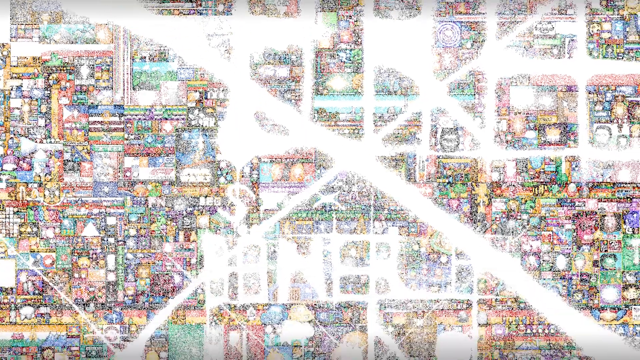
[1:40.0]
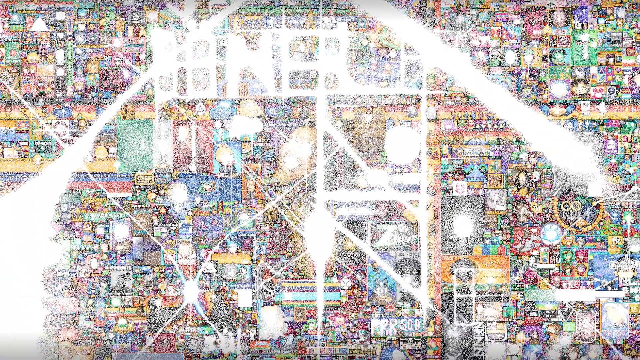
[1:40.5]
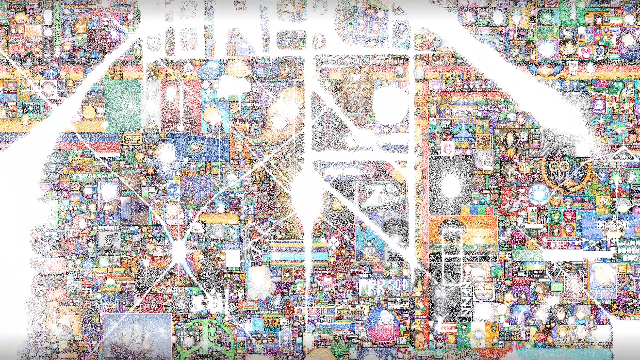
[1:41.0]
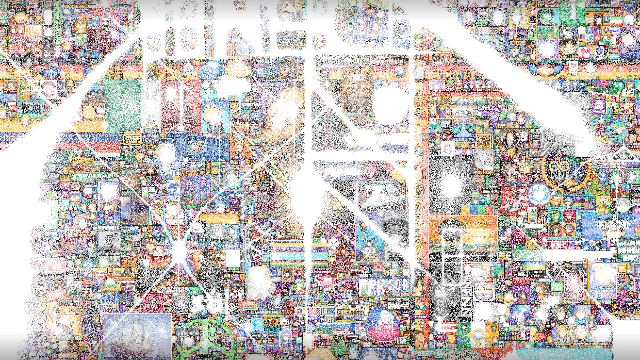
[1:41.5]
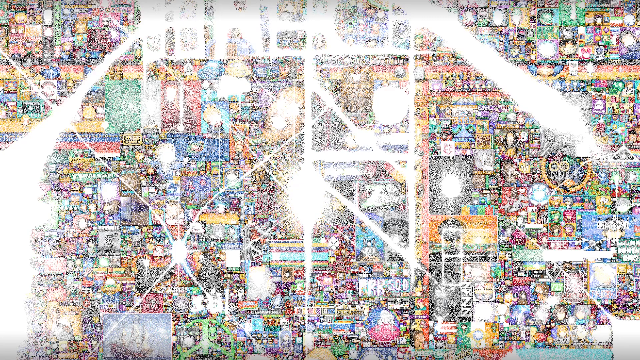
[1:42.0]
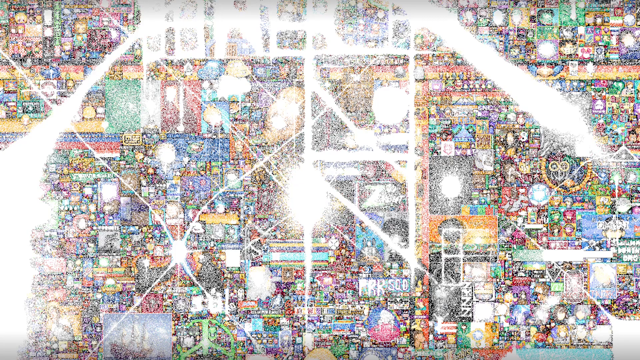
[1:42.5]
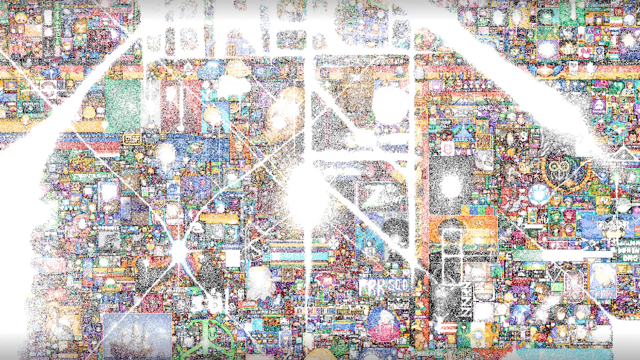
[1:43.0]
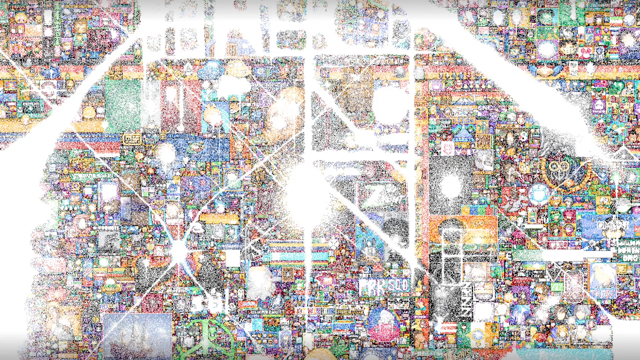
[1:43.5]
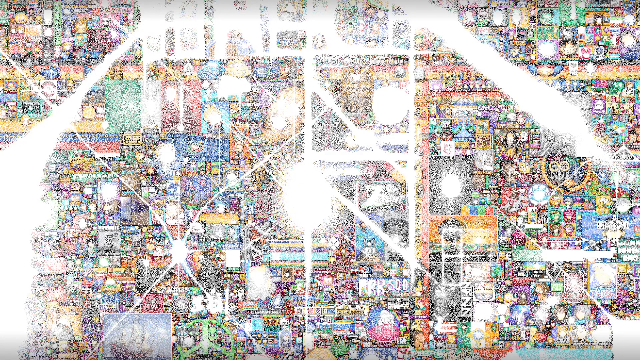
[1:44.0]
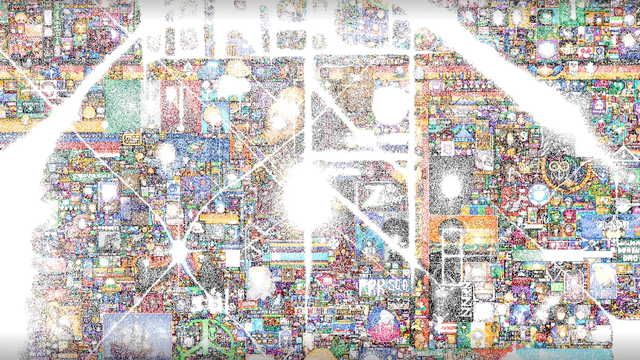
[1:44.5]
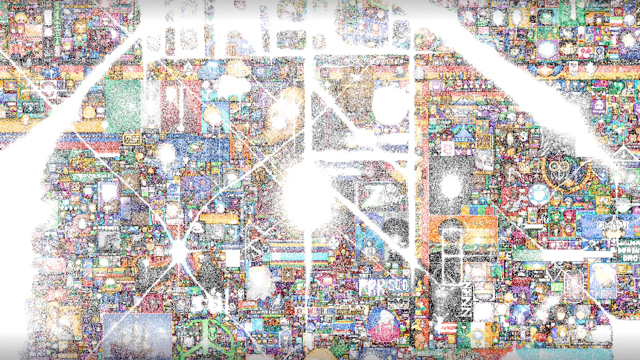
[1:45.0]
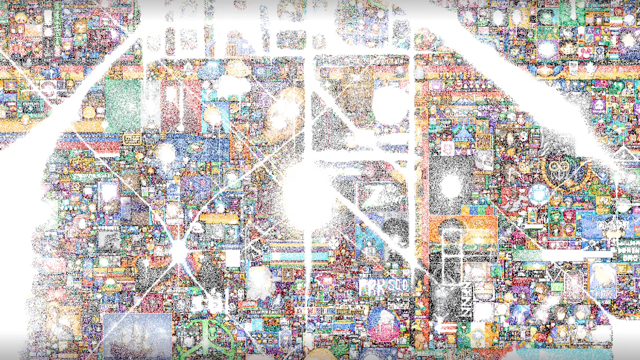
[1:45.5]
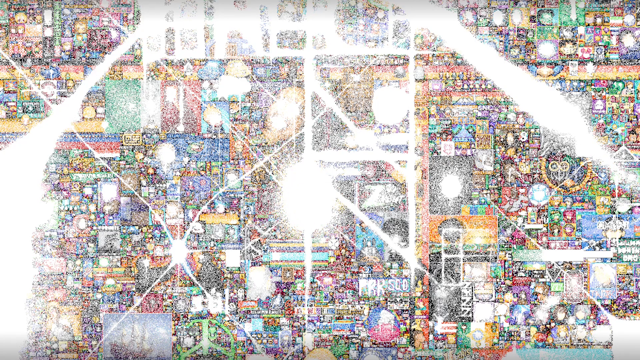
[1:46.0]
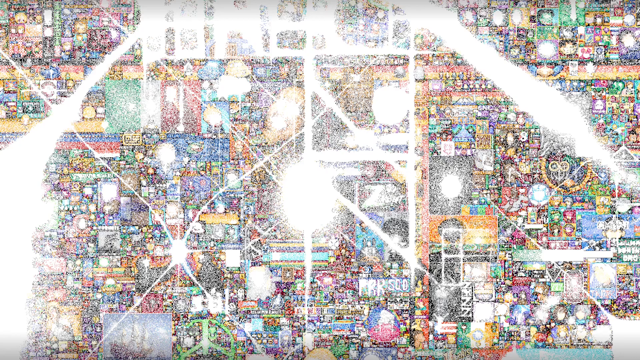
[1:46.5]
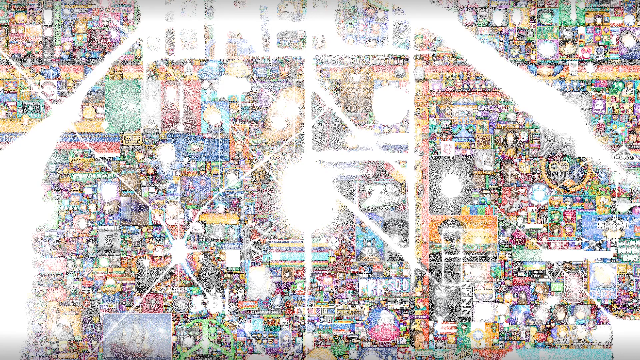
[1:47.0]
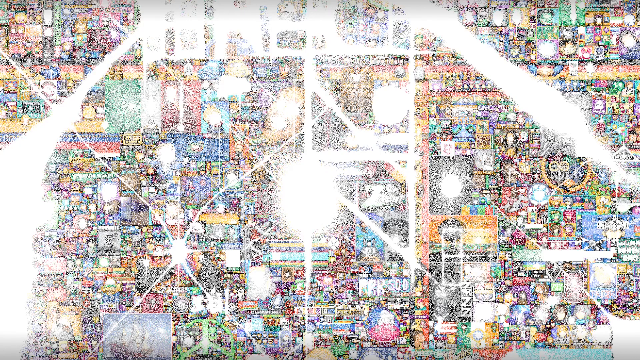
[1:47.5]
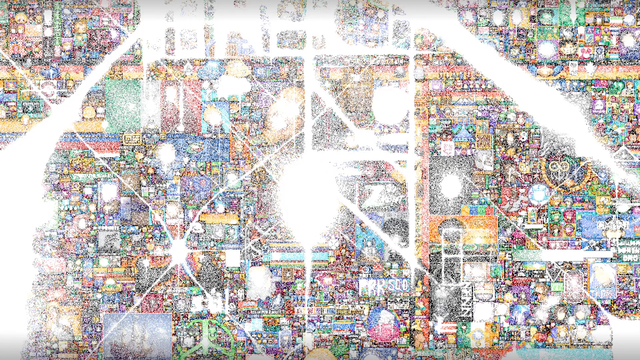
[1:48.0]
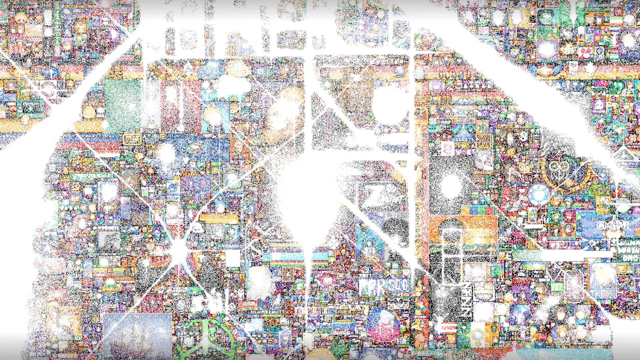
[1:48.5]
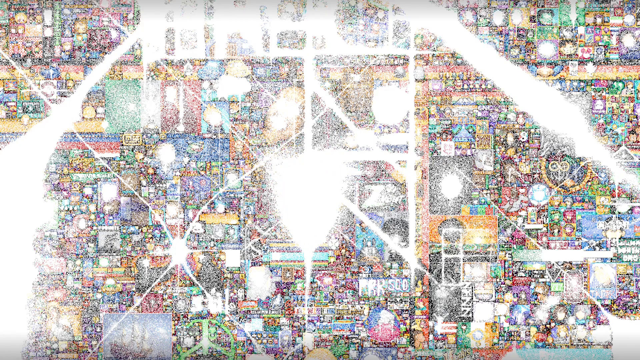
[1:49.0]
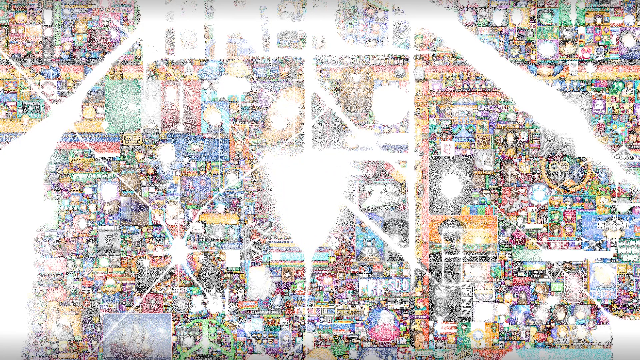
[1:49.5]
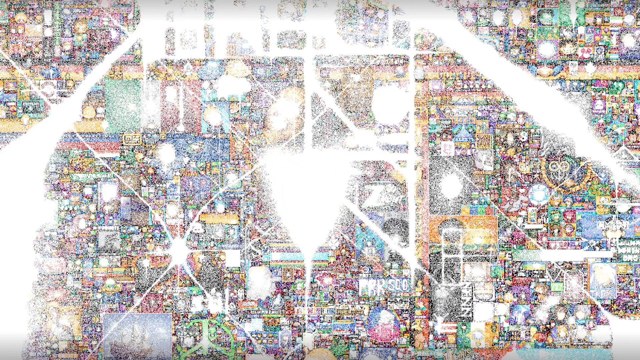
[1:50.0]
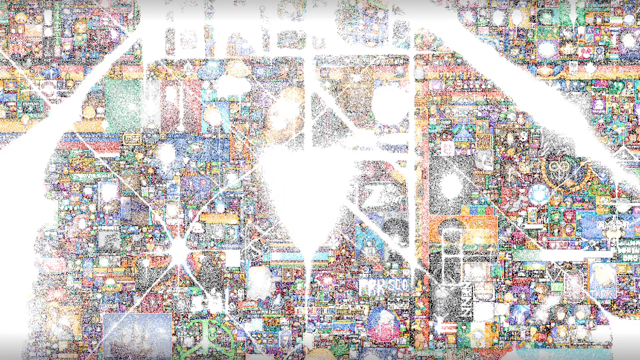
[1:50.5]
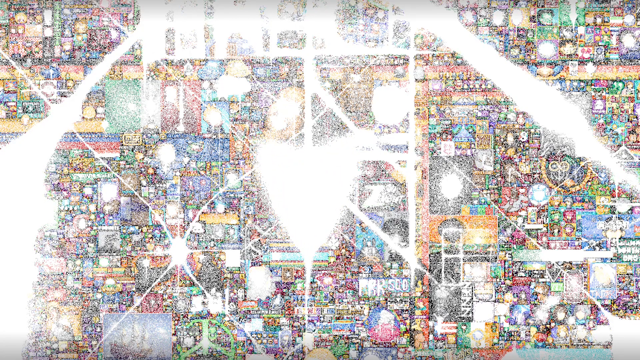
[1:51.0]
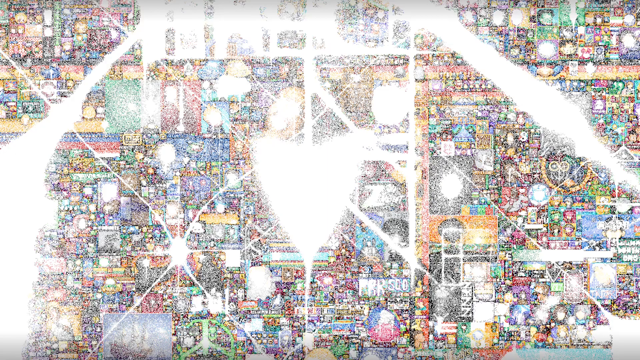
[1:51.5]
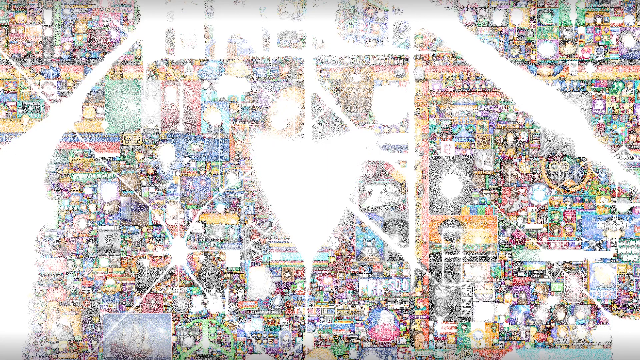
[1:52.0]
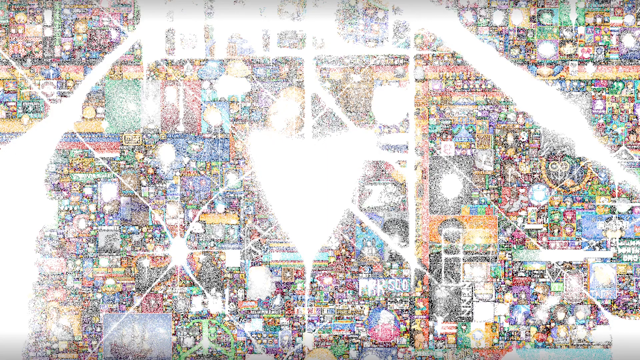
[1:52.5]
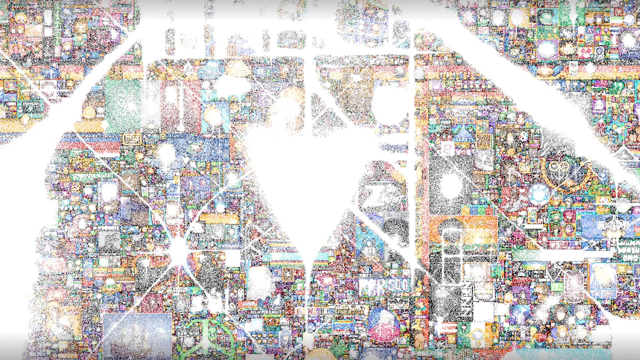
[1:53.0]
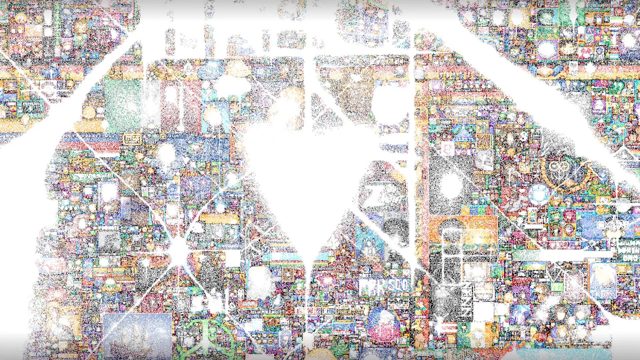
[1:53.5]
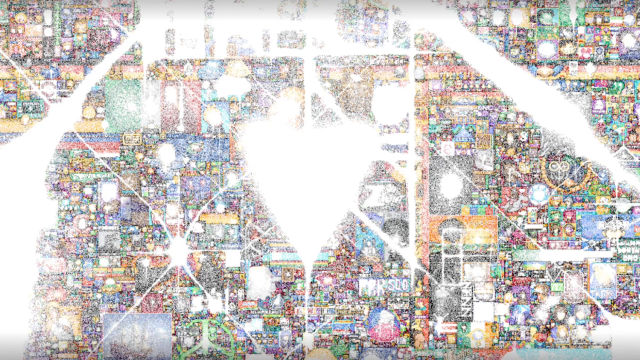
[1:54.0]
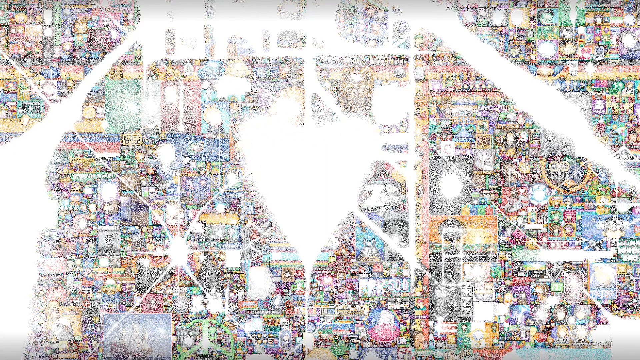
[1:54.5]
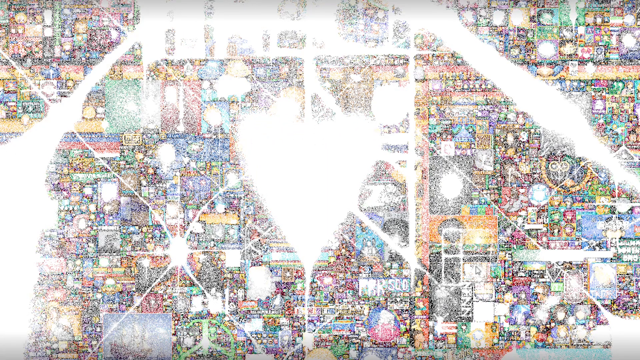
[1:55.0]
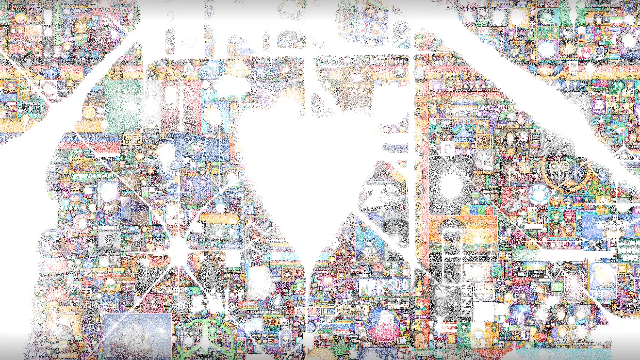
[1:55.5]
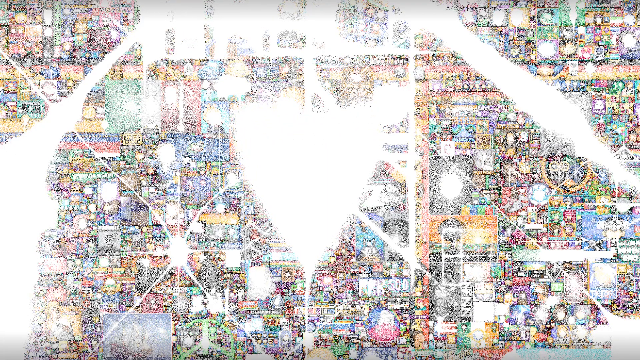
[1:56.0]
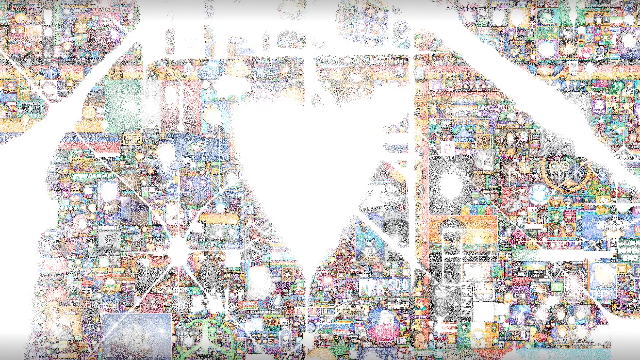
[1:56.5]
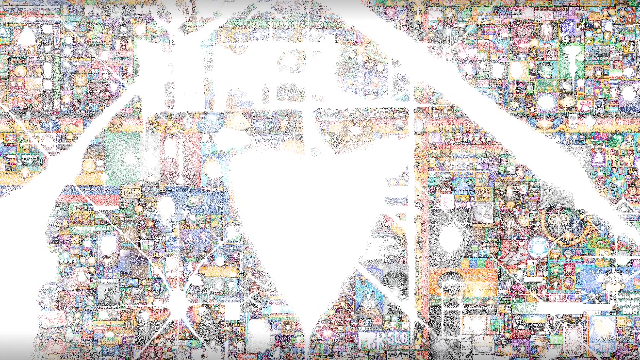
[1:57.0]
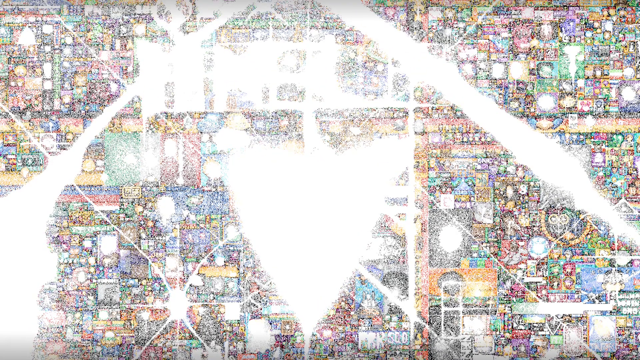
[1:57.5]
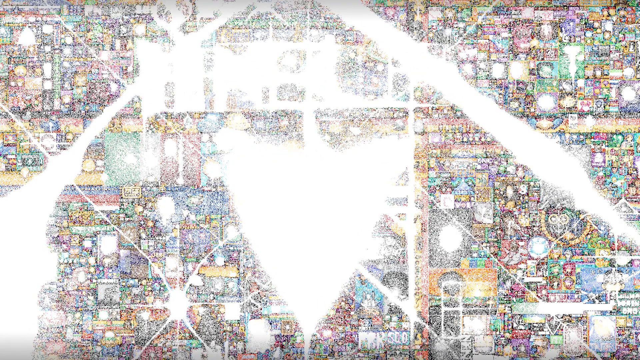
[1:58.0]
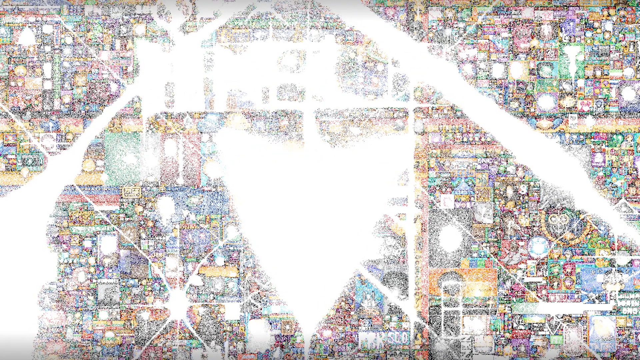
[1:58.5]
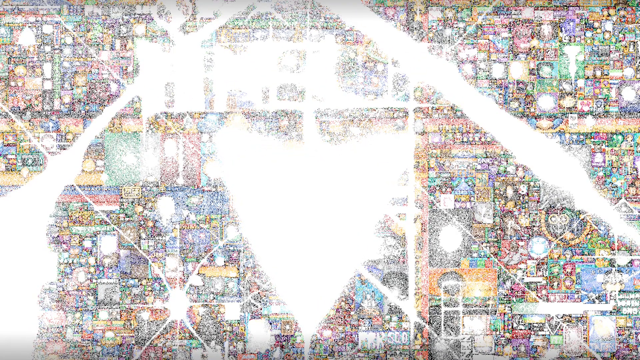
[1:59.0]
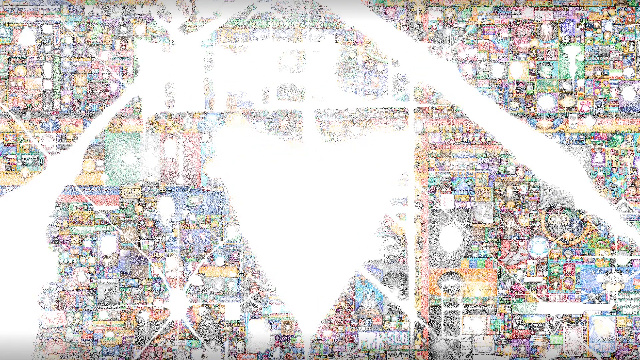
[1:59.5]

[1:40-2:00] A circle forms in the middle as everything disintegrates. It forms a V or triangle shape that also looks like a plane, and it starts to look like a heart. The Mona Lisa painting appears, as do four different characters in four different boxes and the letters "P-R-R-S-O-D". There is the gray animal character from Spirited Away, apparently a raccoon. A triangular hole forms in the middle. A green peace hippie logo is visible. Much is too small to discern. Everything becomes small-scale dots, and the map, which looked like a bunch of roads, is destroyed as everything disintegrates in the middle.